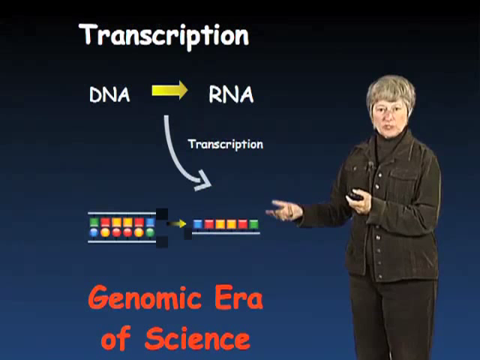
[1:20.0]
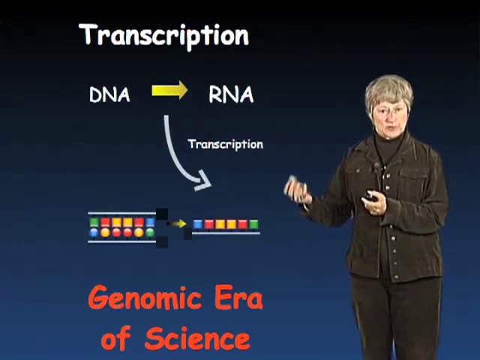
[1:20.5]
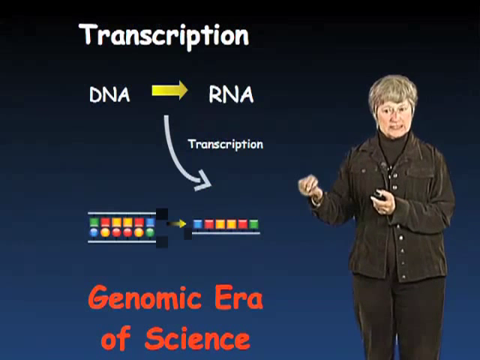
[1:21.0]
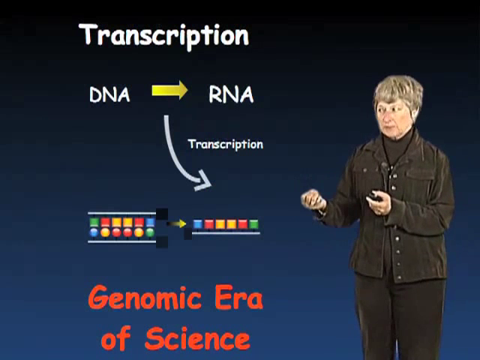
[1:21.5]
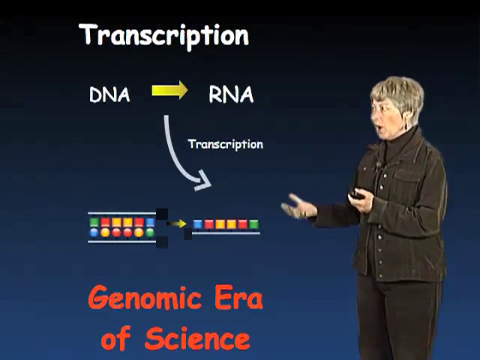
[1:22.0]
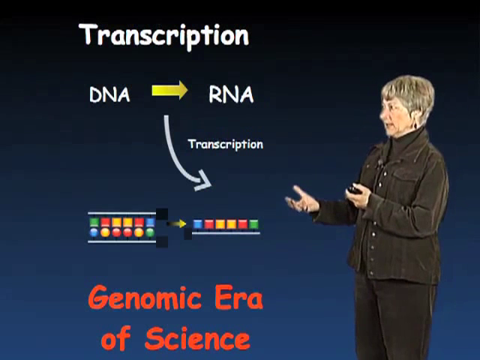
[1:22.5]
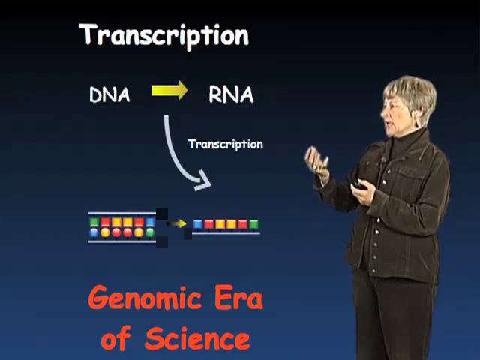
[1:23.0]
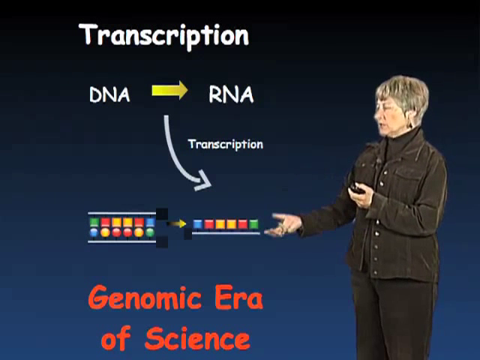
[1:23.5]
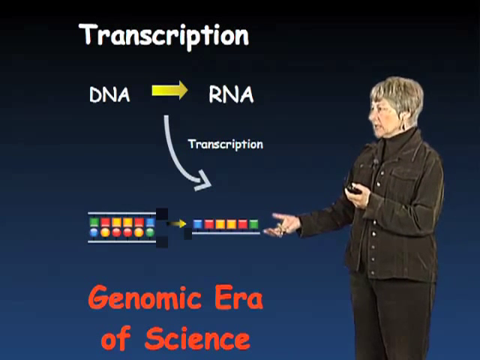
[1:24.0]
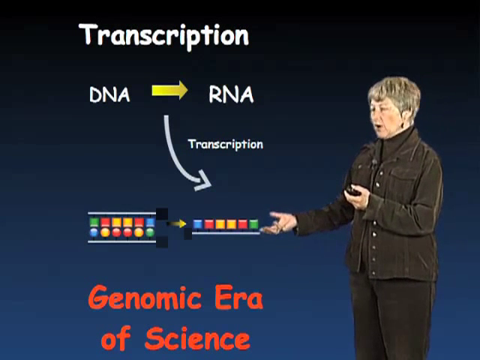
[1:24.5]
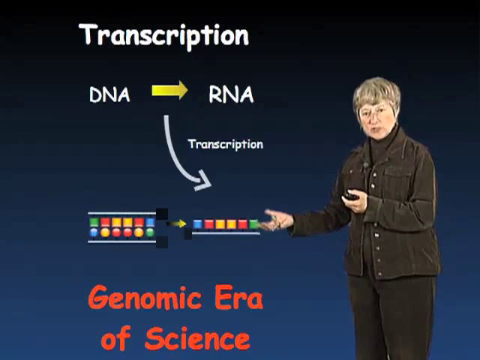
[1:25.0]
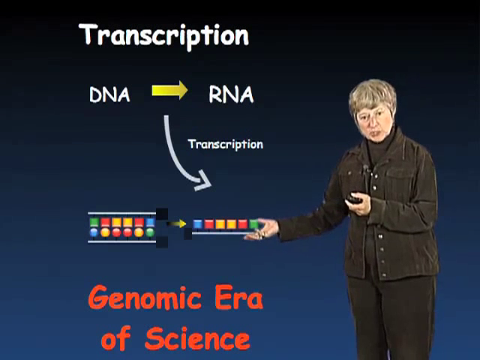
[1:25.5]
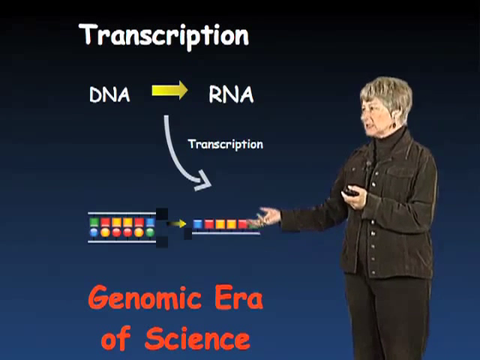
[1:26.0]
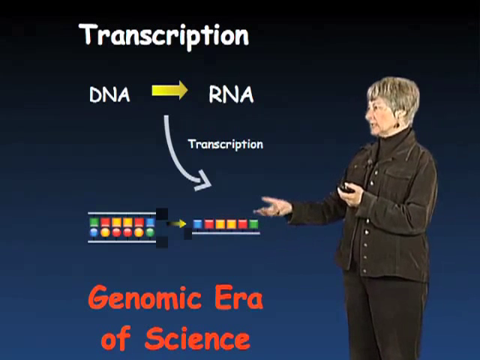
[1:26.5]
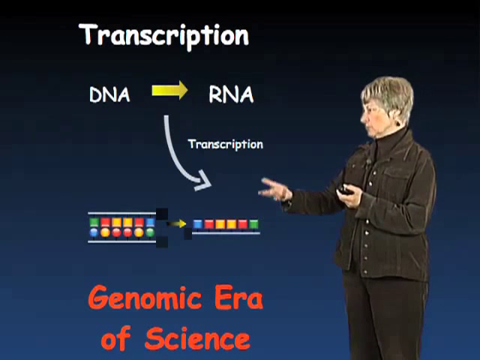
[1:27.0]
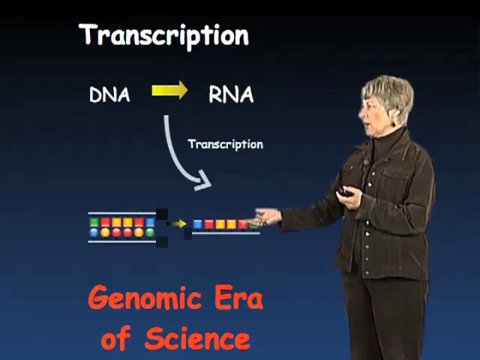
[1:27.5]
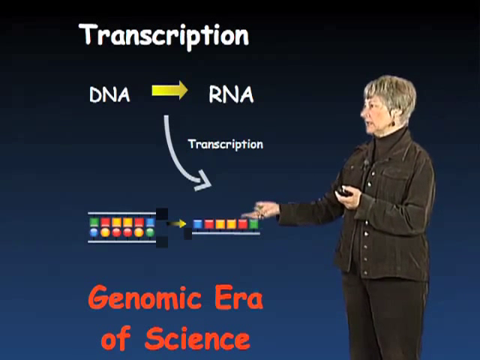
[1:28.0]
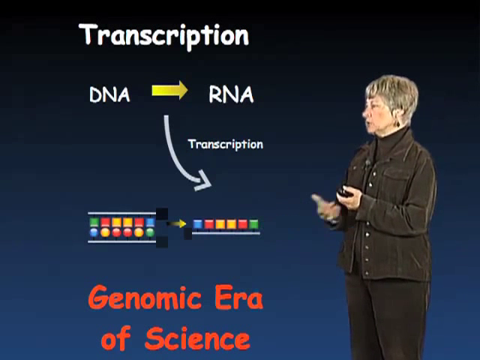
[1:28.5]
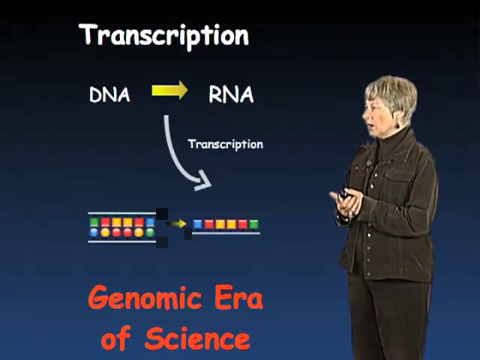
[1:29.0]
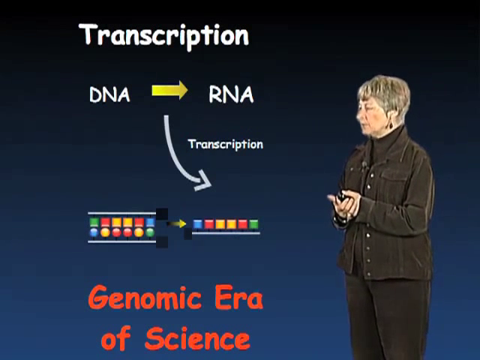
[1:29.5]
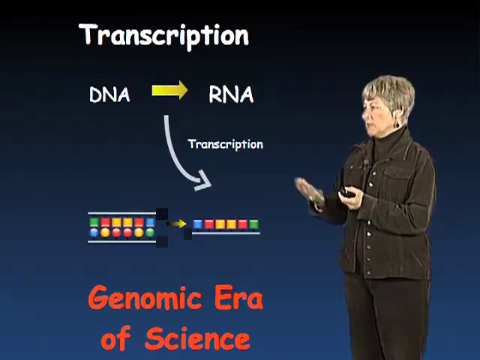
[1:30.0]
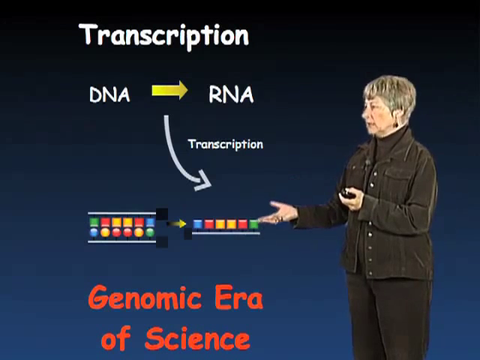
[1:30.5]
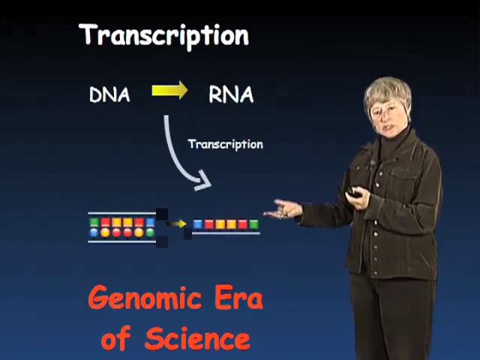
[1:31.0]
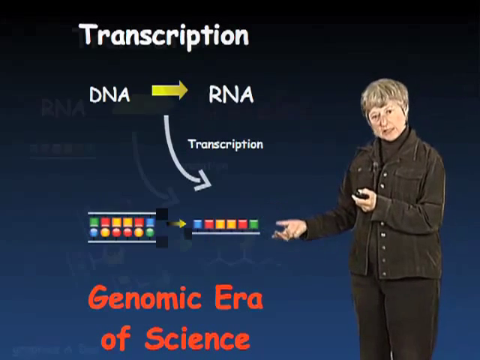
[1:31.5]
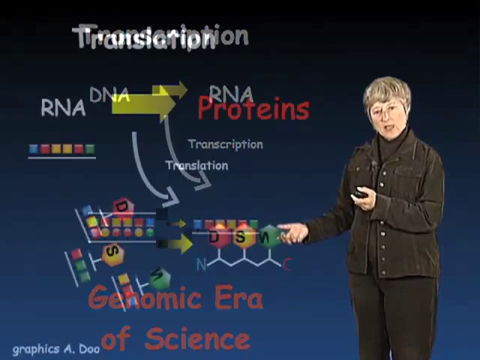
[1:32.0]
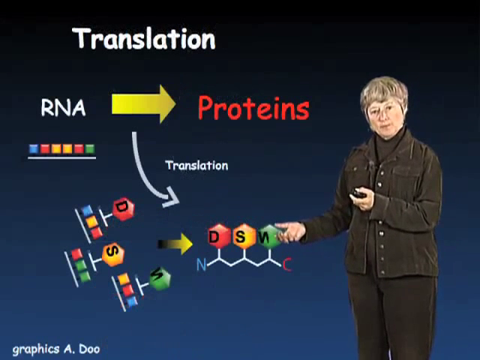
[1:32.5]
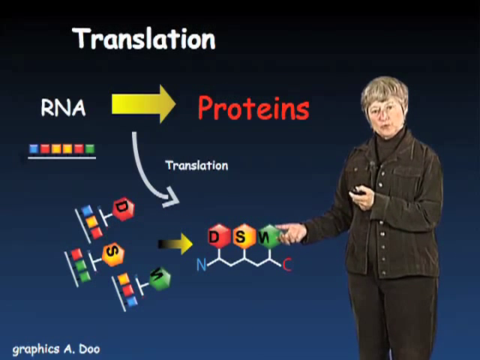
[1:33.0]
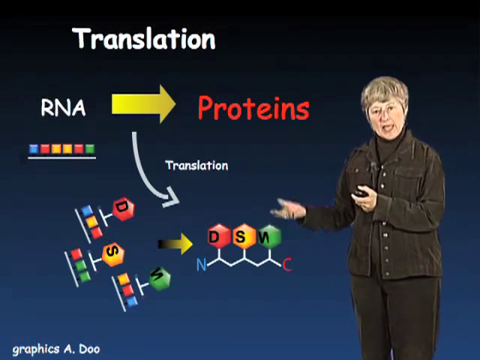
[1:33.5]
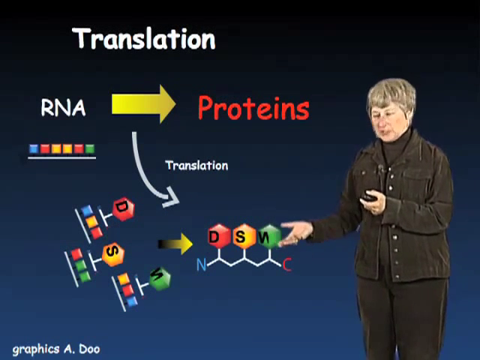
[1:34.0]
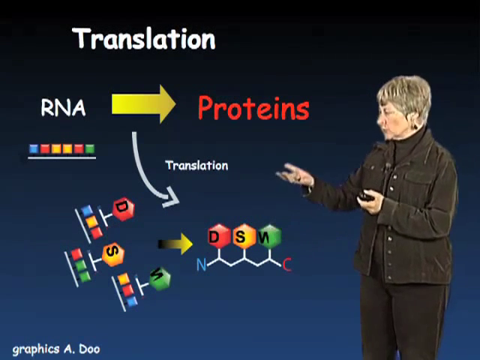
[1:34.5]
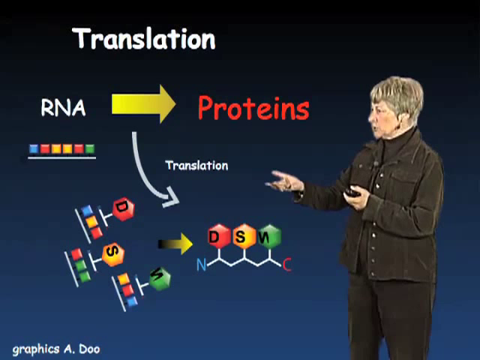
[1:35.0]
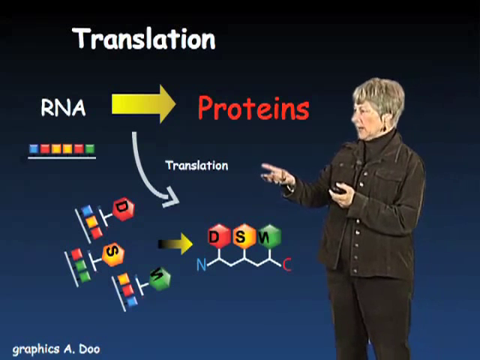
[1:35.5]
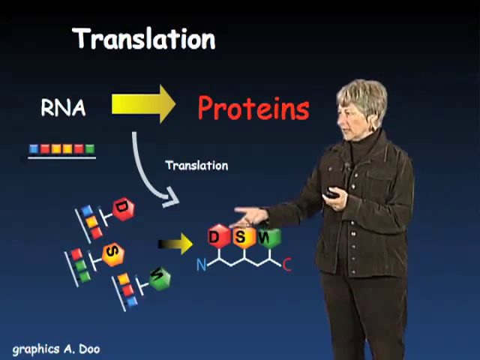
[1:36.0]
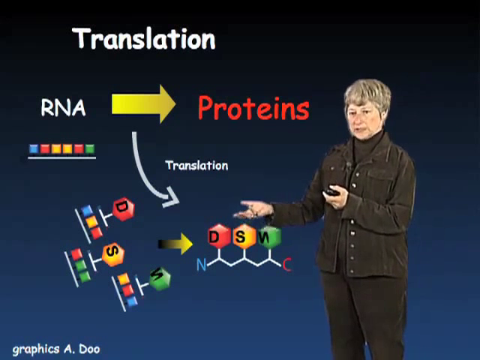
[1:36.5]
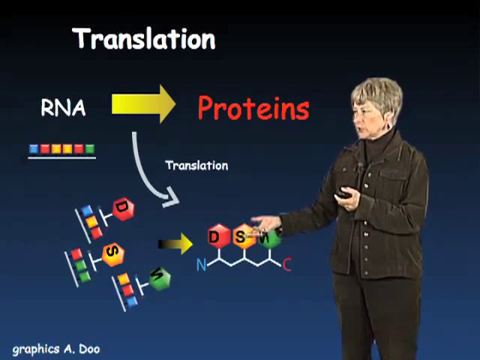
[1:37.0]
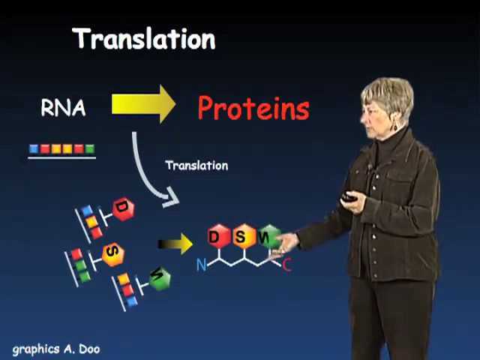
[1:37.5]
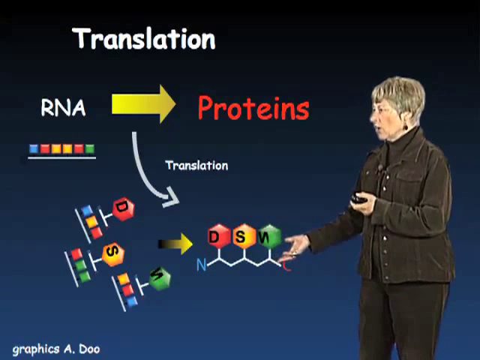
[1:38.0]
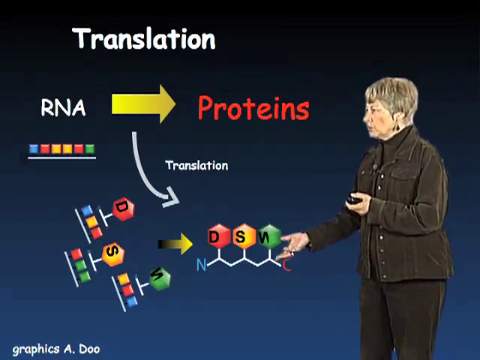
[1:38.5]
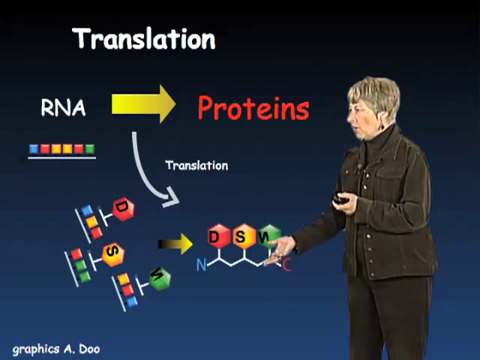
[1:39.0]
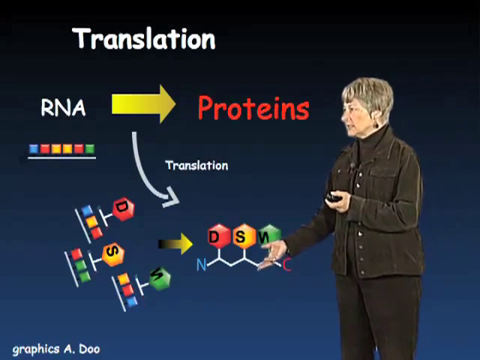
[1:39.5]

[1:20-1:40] A woman dressed in gray with short gray hair is in the bottom left corner of the screen, speaking, holding a clicker in her left hand and gesturing with her right hand. The screen says "transcription" at the top and shows "DNA" to "RNA" with a curved arrow going toward the right and "transcription" above the arrow. Two layers of colored objects have an arrow going to one layer of colored objects. The bottom of the screen says "genomic era." A new screen has "translation" at the top and "RNA to proteins," with a row of colored objects underneath "RNA." A white arrow comes down from the yellow arrow and points toward the right of the screen, with "translation" above it. Underneath are larger objects with letters in them. On the left of the screen, D is on top of S on top of M, and an arrow points to D, S, M on colored objects in a straight line.